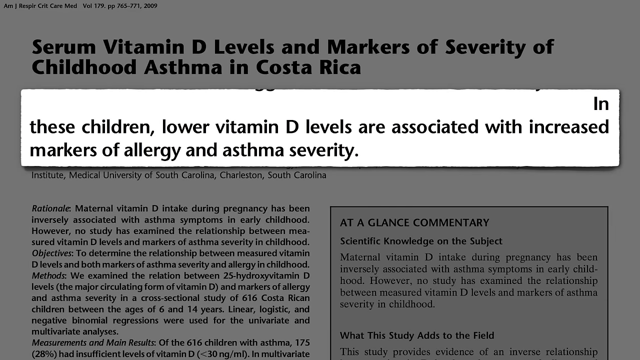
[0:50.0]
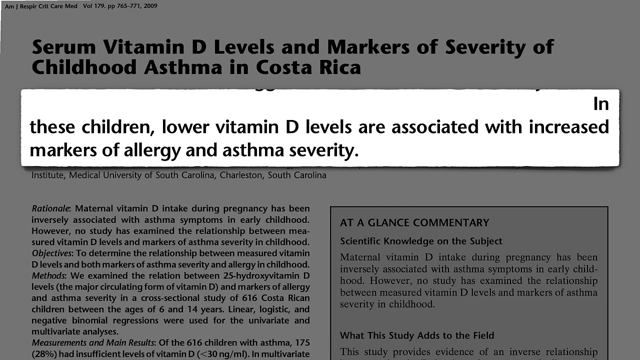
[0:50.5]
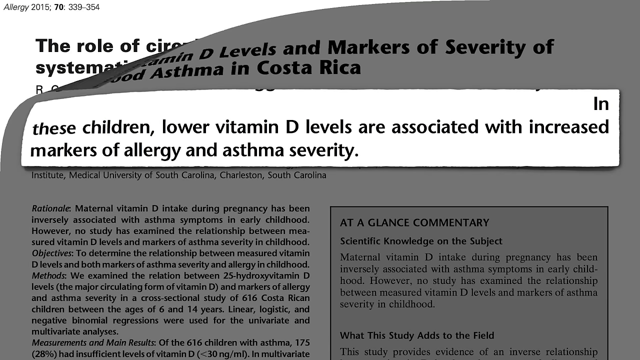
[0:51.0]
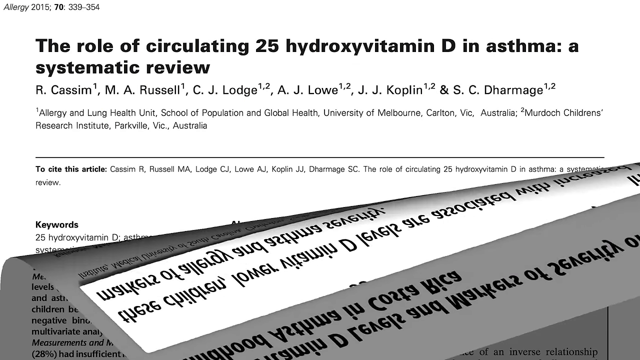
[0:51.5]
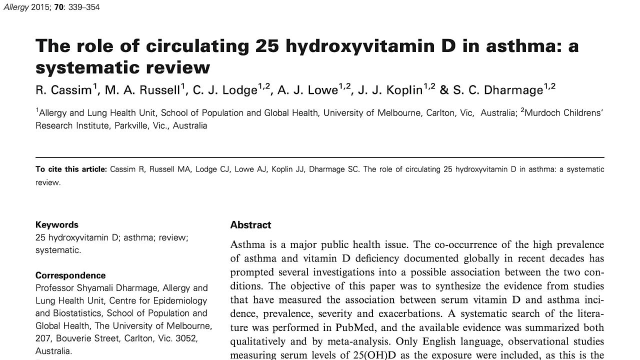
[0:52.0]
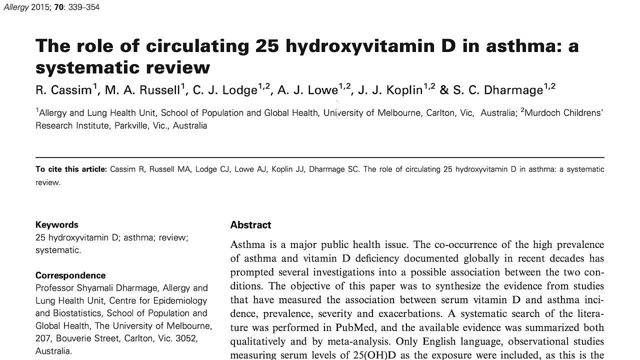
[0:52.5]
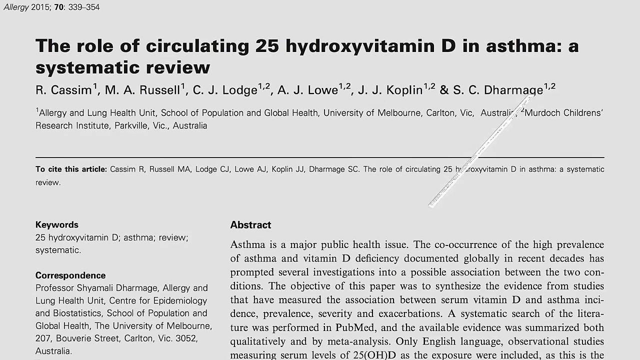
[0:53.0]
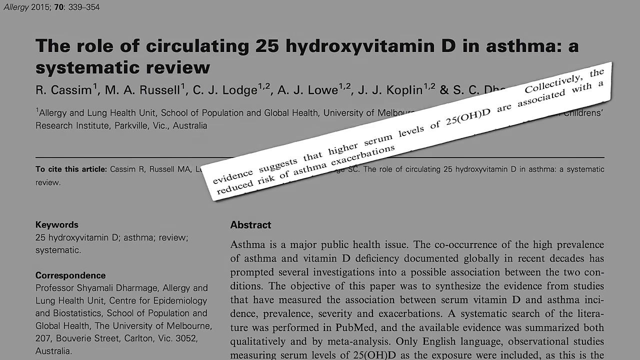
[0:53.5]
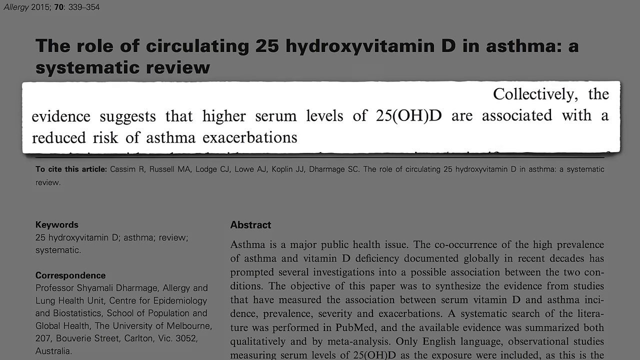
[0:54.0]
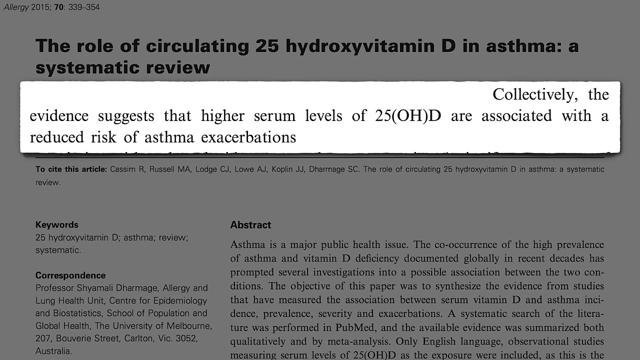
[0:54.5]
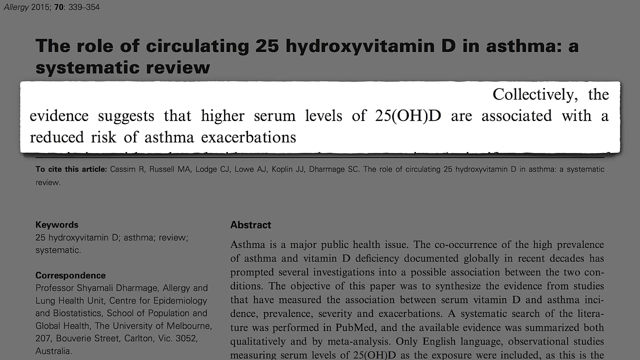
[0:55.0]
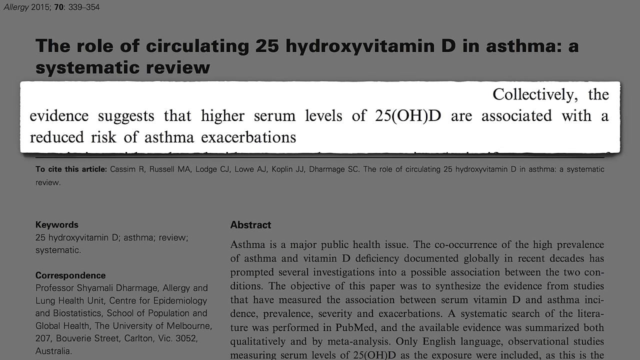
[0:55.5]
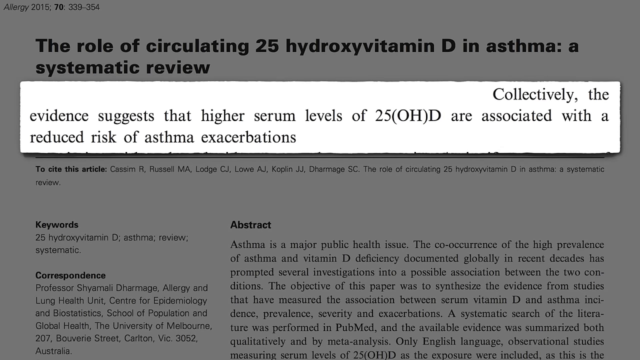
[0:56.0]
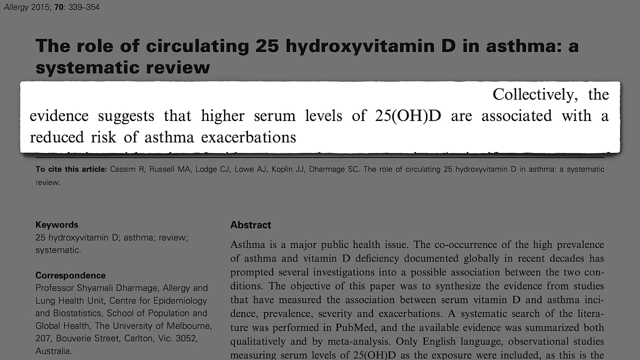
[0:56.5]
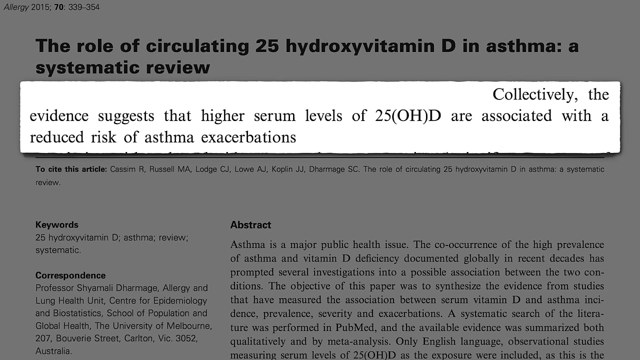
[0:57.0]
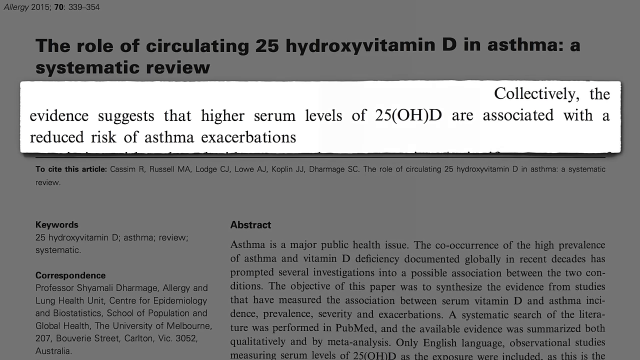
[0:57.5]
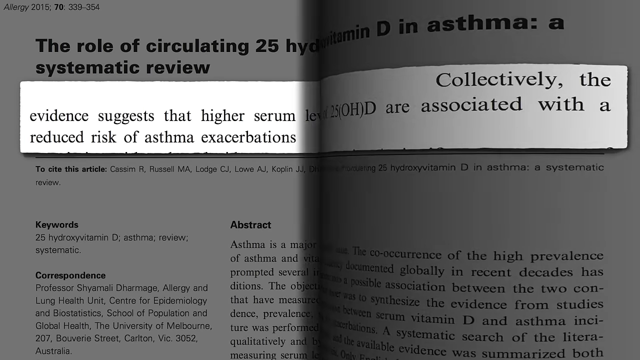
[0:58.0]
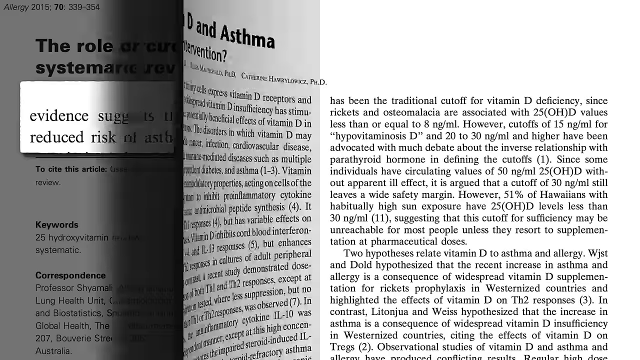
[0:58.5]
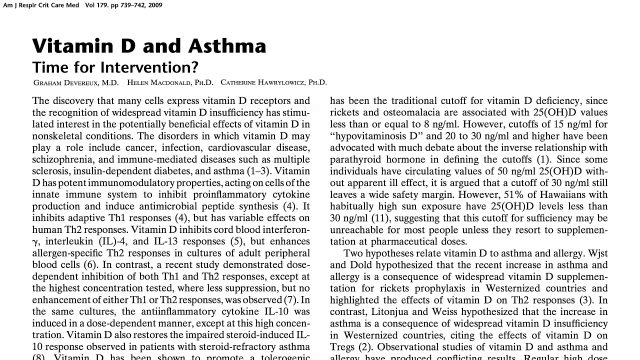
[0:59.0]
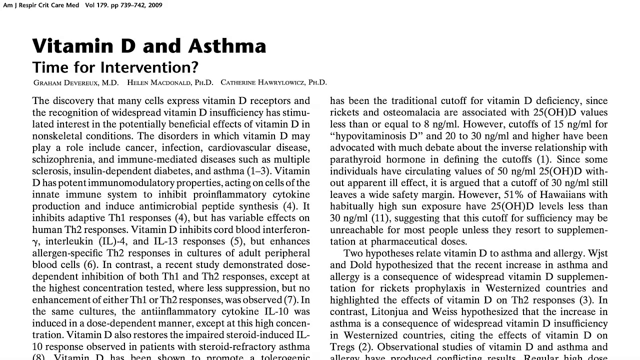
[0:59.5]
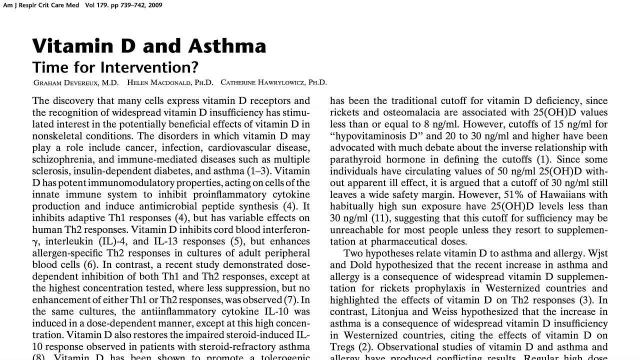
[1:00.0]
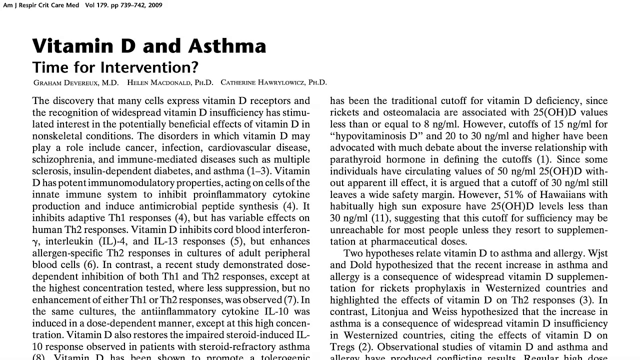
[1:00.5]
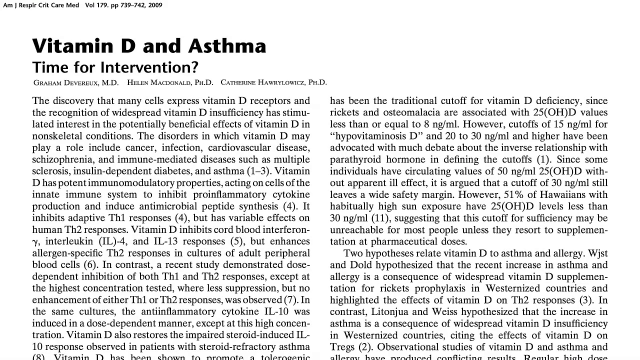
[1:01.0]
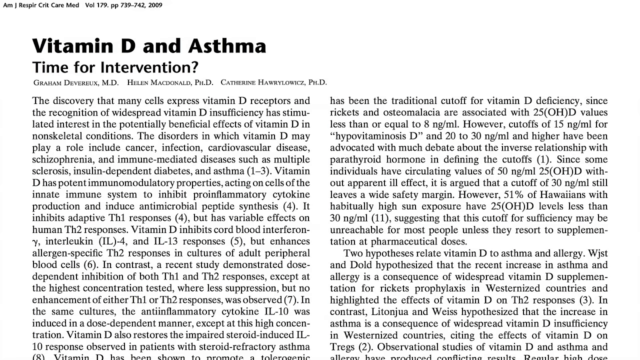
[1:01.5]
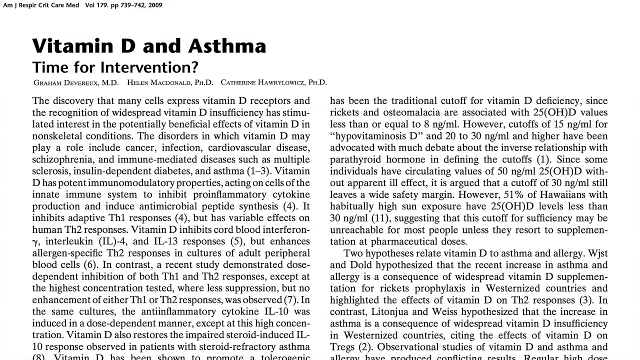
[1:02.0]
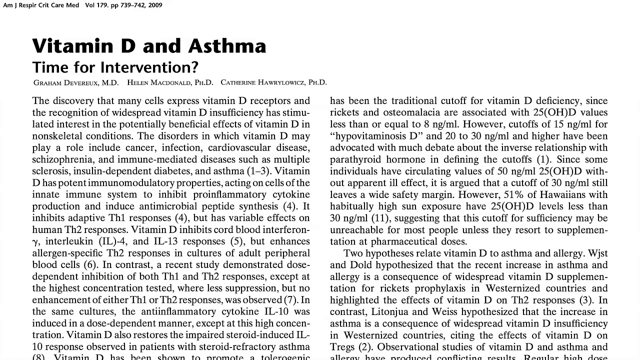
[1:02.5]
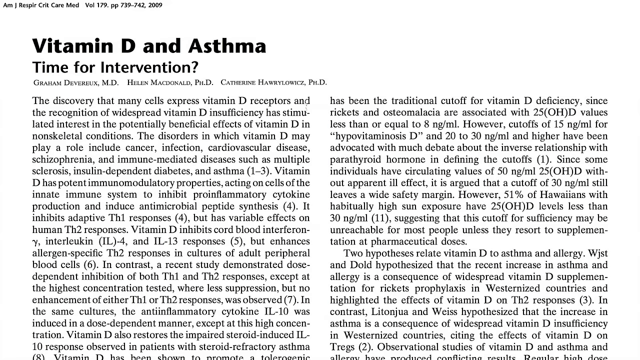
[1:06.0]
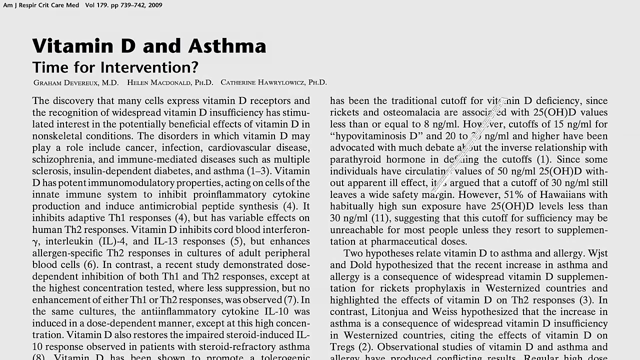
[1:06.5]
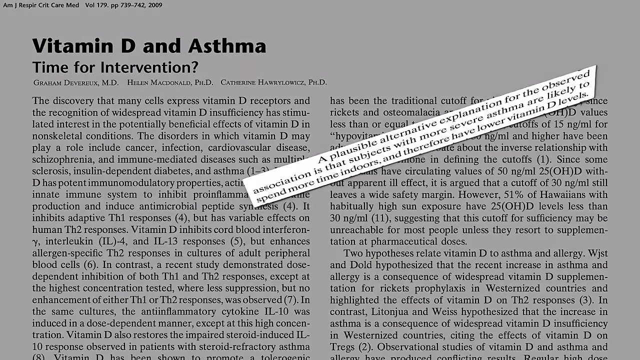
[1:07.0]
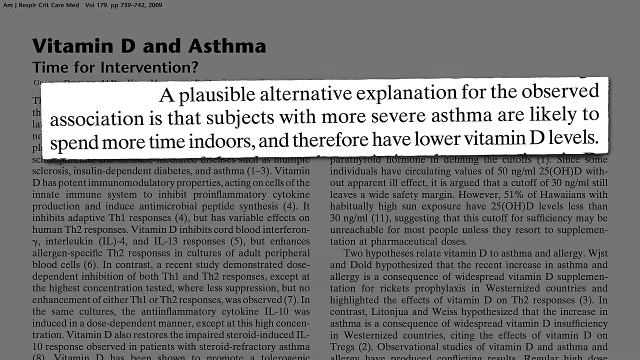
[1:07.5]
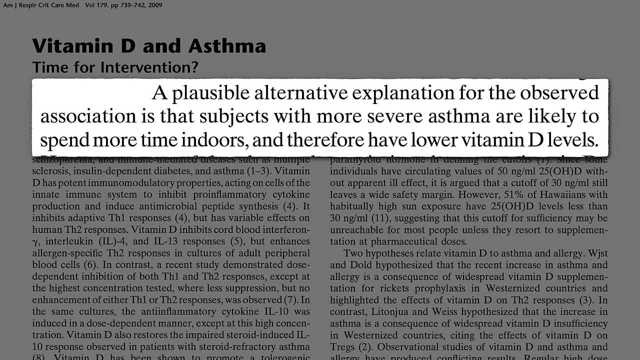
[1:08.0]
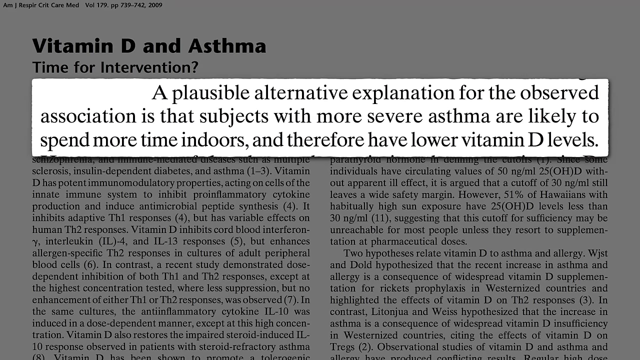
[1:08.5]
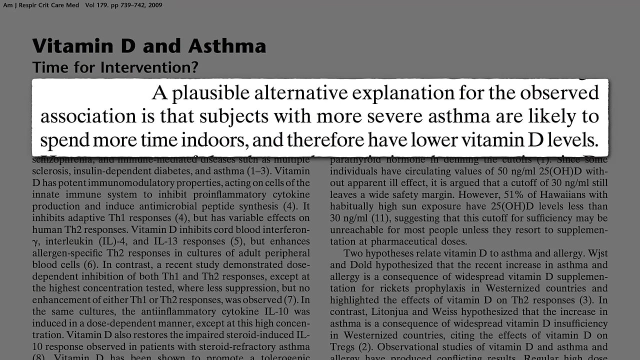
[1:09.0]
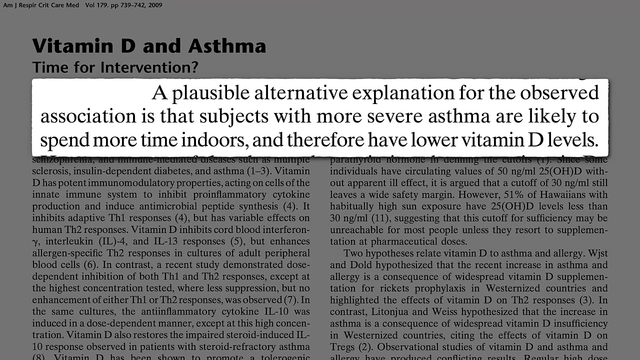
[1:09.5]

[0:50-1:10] In the background is a printed article whose bold headline reads "serum vitamin D levels and markers of severity of childhood asthma in Costa Rica", with the article readable below it. In the center of the screen is a long rectangular excerpt reading "in these children, lower vitamin D levels are associated with increased markers of allergy and asthma severity." This quickly peels away and a new article is shown, titled in bold at the top "the role of circulating 25 hydroxy vitamin D in asthma, a systematic review". An excerpt quickly flashes in the center of the screen: "collectively, the evidence suggests that higher serum levels of 25D are associated with the reduced risk of asthma exacerbations." A page then folds over and a new article is displayed, titled in bold black font "Vitamin D and Asthma", with "Time for Intervention?" below it and the article below that. Another excerpt flashes in the center: "a plausible alternative explanation for the observed association is that subjects with more severe asthma are likely to spend more time indoors and therefore have lower vitamin D levels."